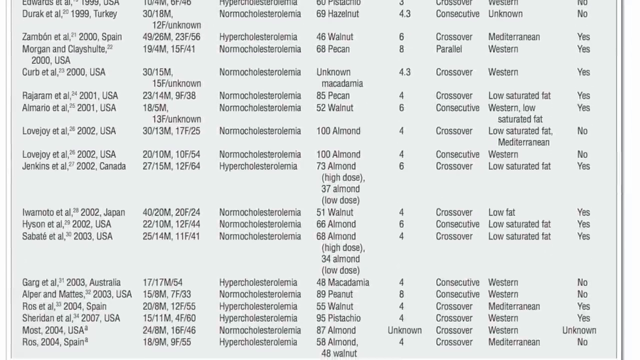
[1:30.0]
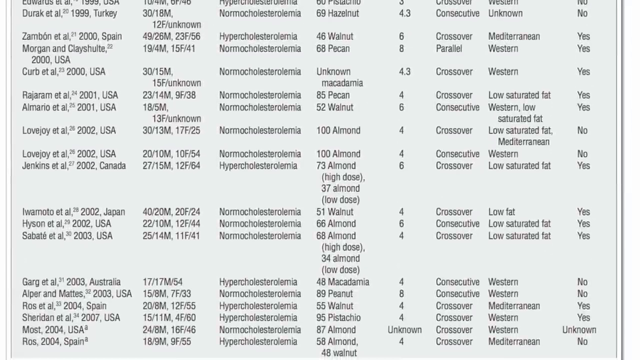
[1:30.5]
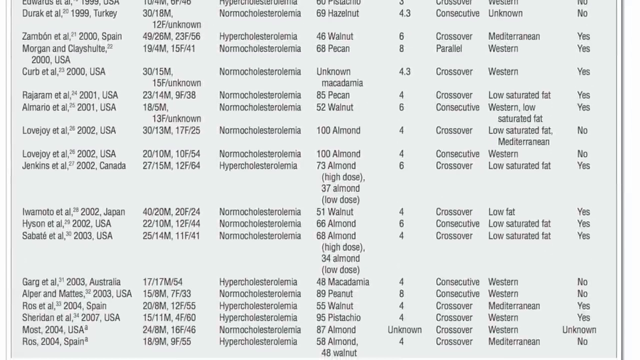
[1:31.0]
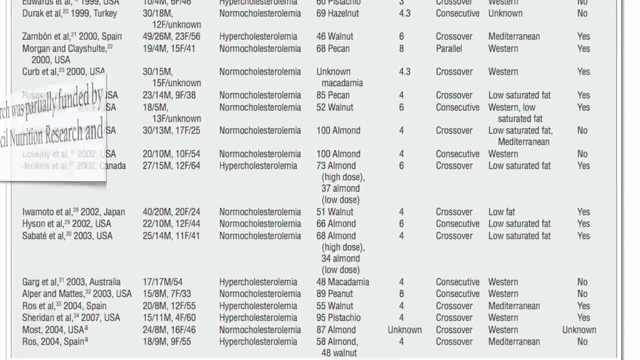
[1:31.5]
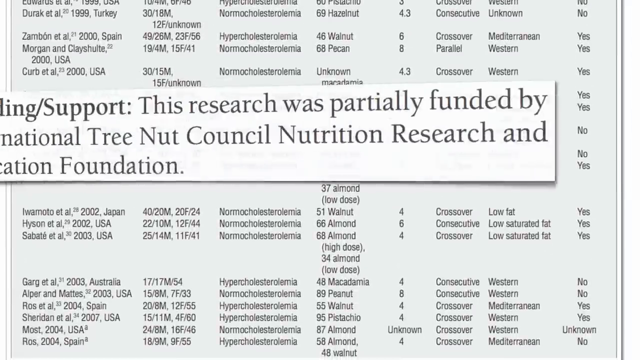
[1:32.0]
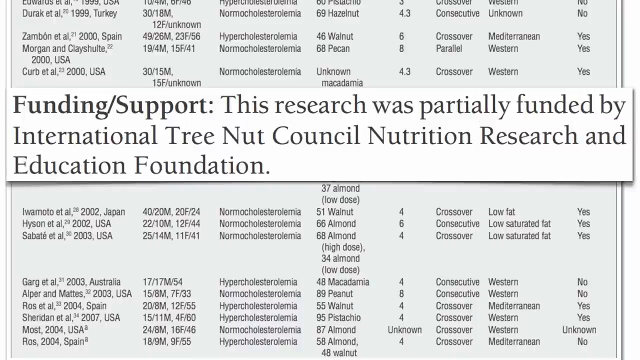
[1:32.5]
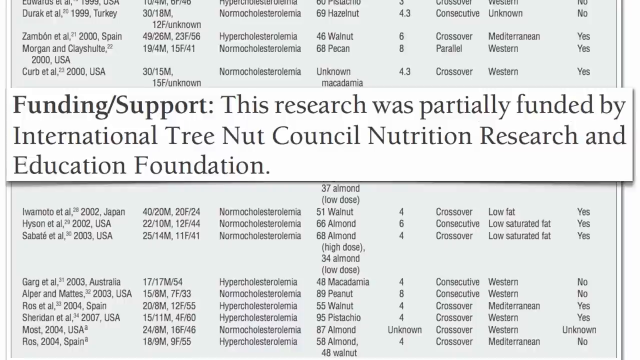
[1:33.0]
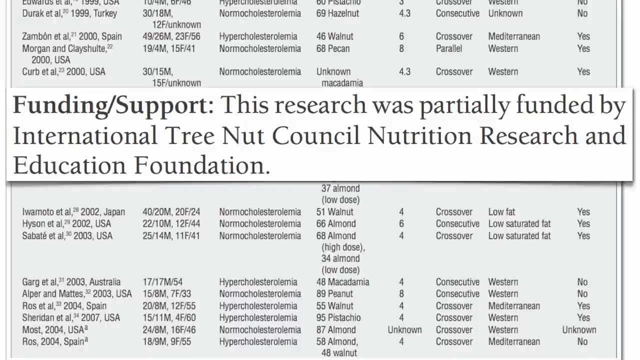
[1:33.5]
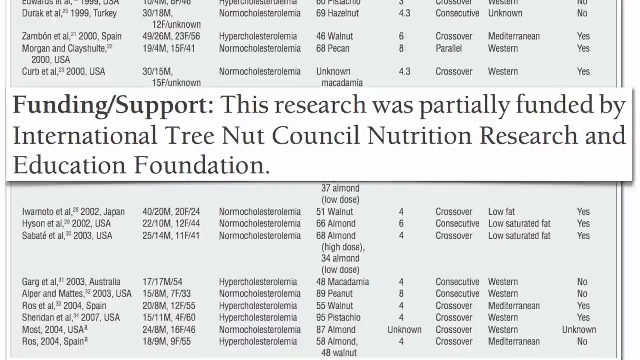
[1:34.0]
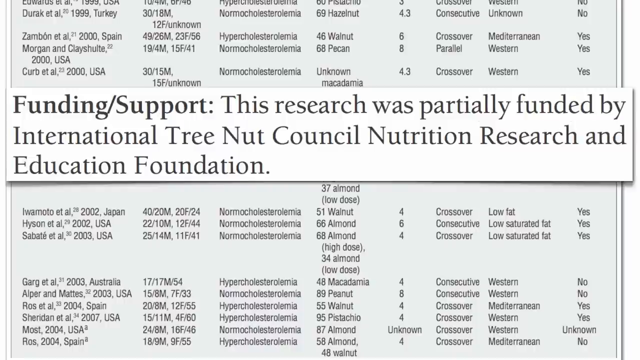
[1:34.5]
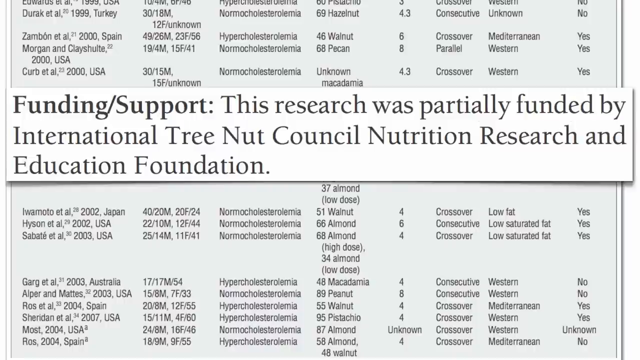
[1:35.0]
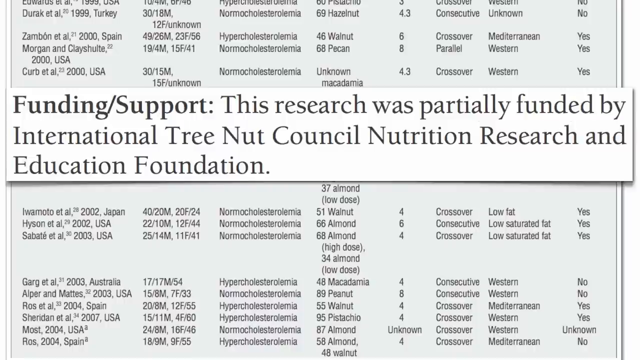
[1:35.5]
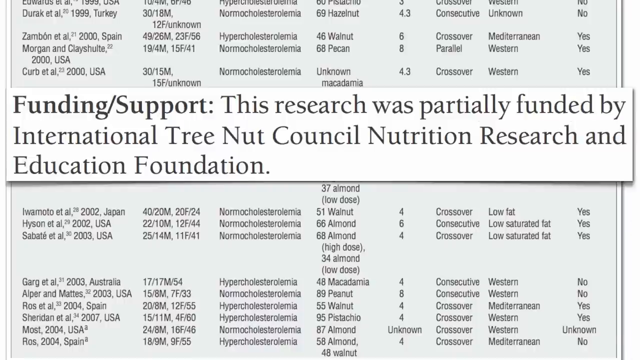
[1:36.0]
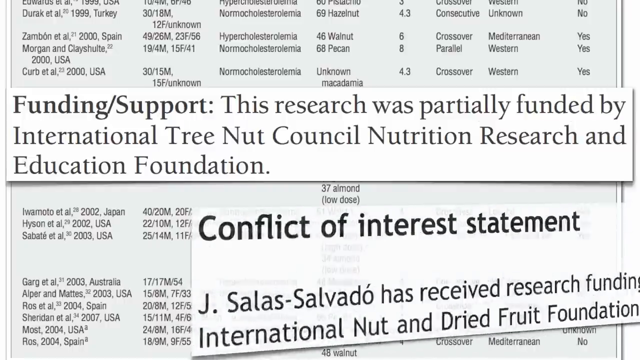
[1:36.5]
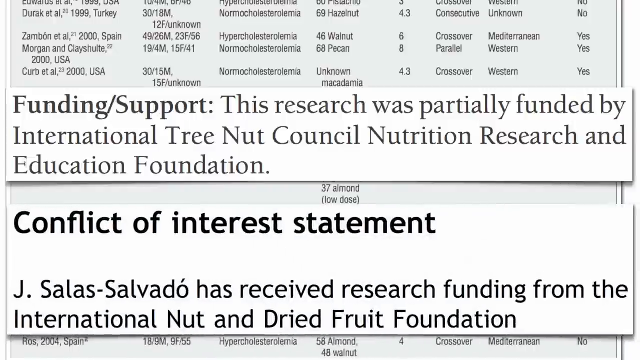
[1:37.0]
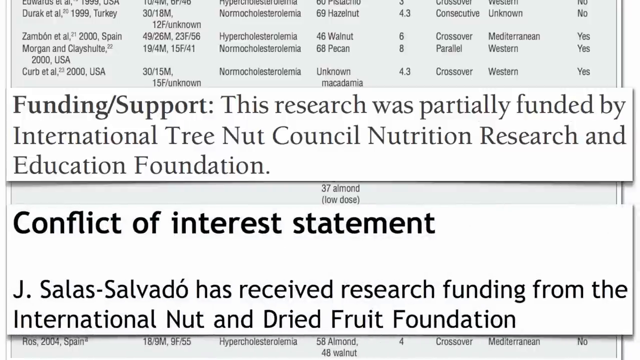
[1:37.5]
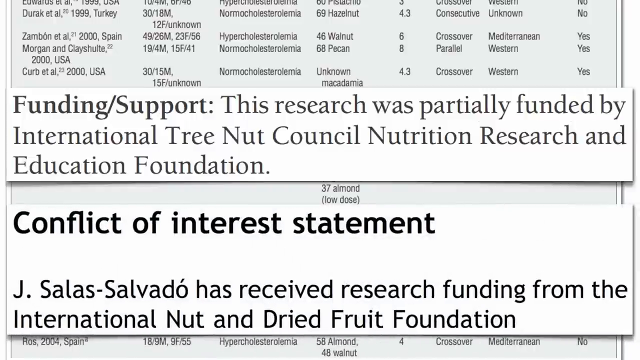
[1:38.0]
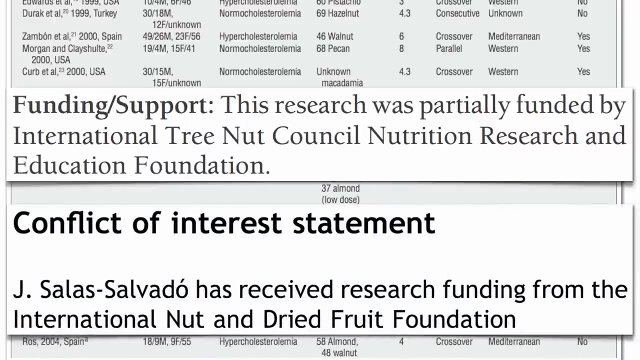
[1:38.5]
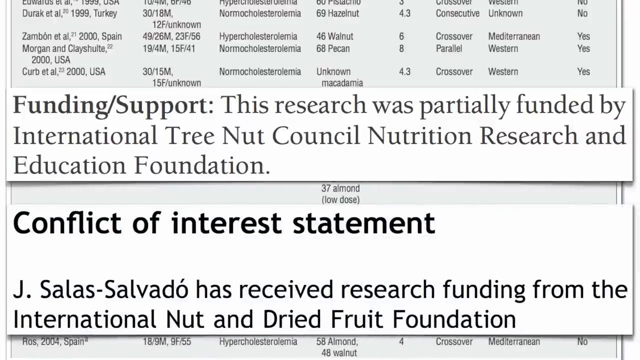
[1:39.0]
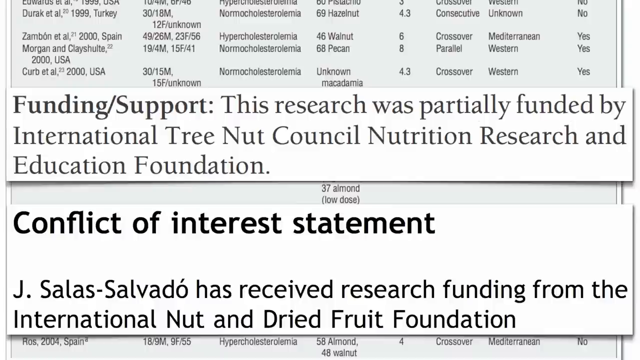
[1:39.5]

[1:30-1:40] The table shows information on different nuts, including peanut, walnut, pistachio, almond, hazelnut and macadamia. Toward the middle of the shot, a banner appears across it reading "funding/support" followed by "this research was partially funded by International Tree Nut Council, Nutrition Research and Education Foundation." A new banner then appears at the bottom reading "conflict of interest statement. J. Salas-Salvato has received research funding from the International Nut and Dried Fruit Foundation."